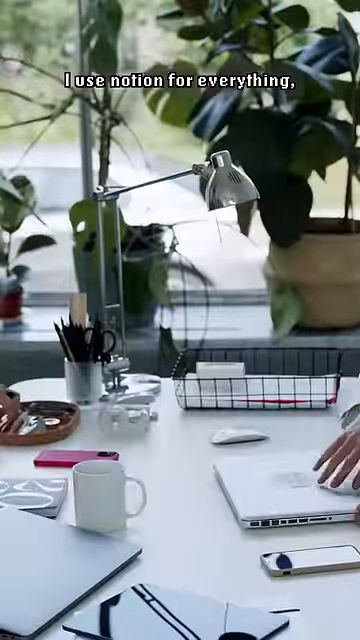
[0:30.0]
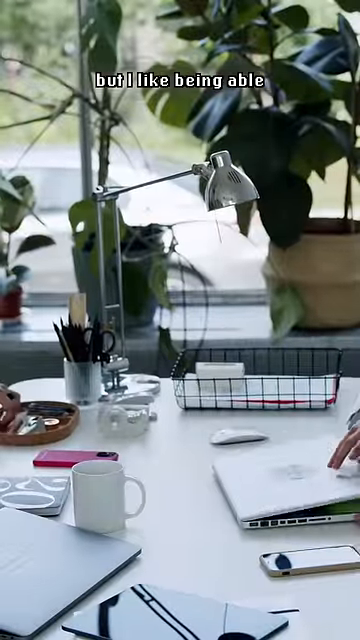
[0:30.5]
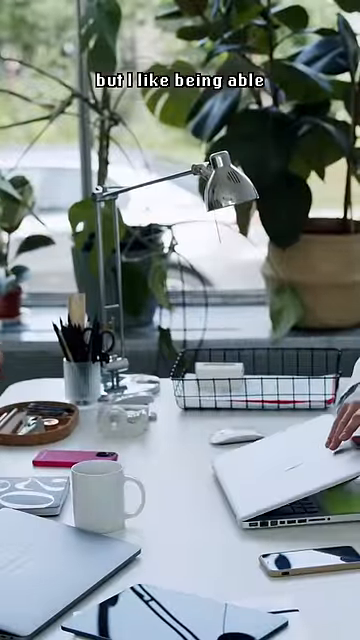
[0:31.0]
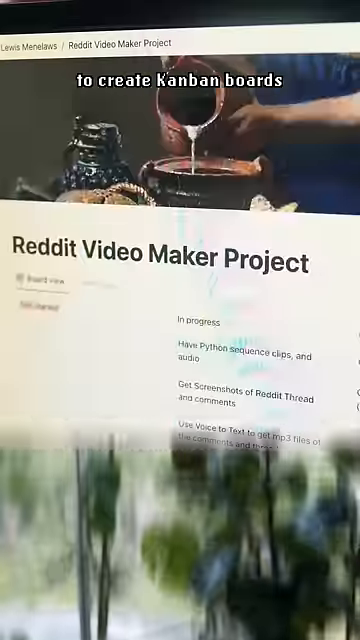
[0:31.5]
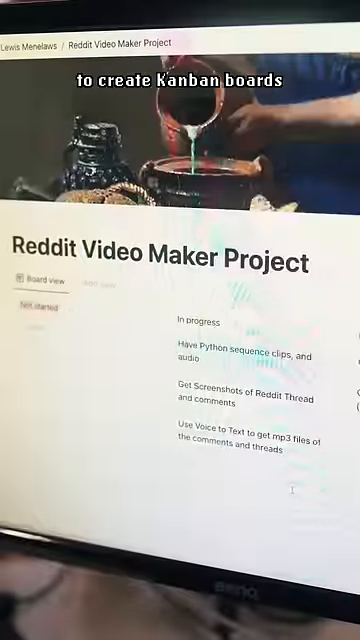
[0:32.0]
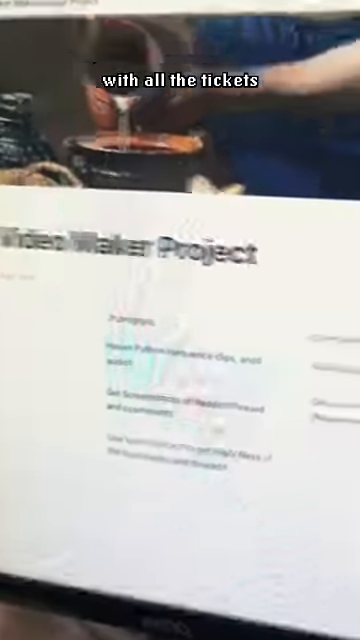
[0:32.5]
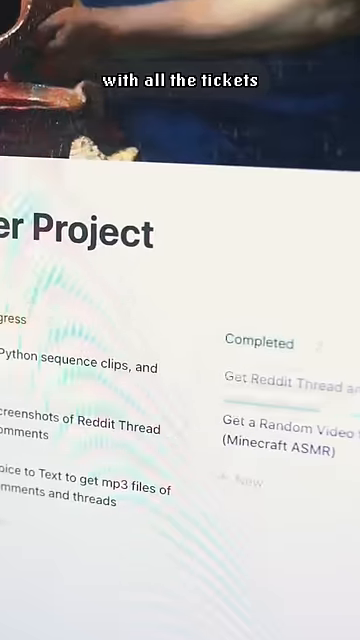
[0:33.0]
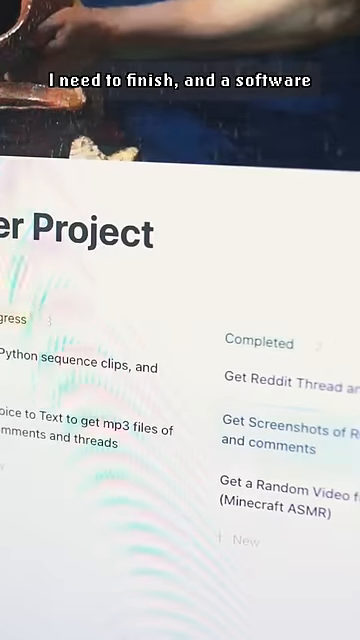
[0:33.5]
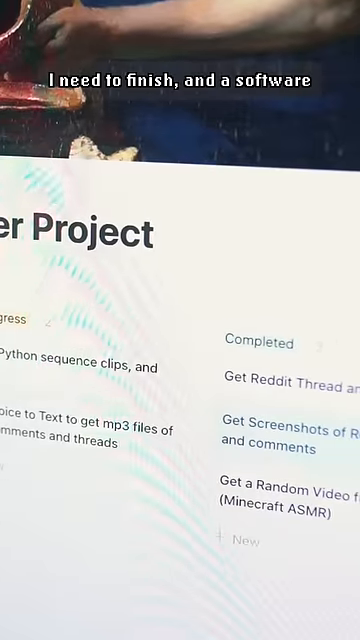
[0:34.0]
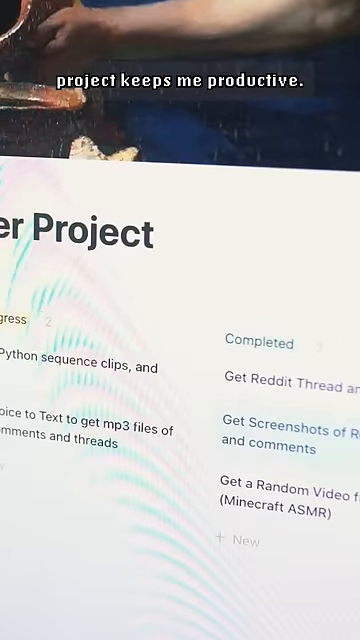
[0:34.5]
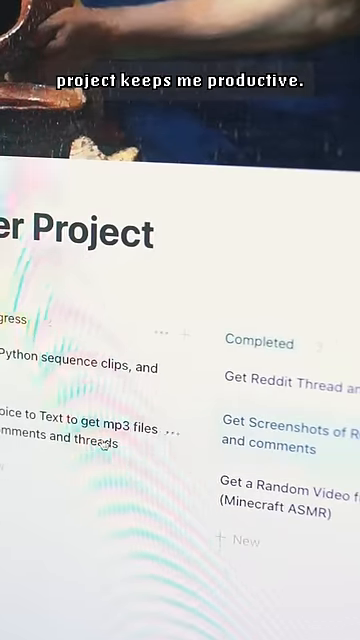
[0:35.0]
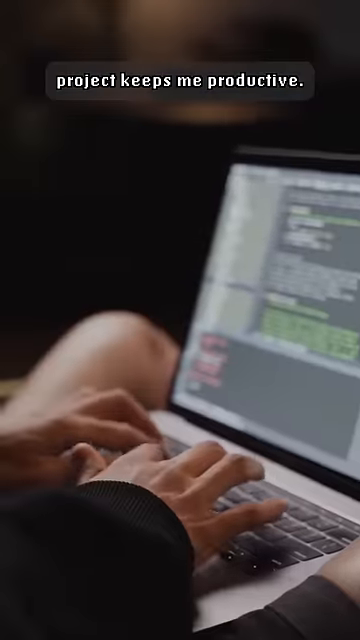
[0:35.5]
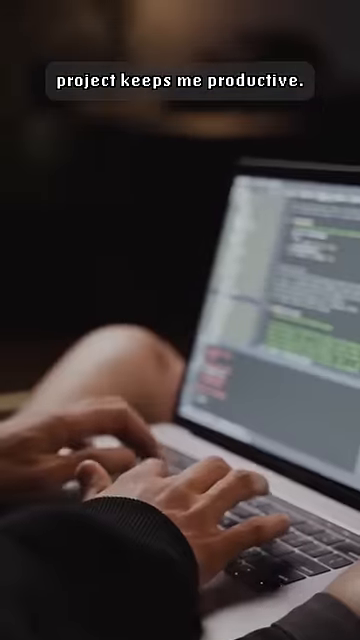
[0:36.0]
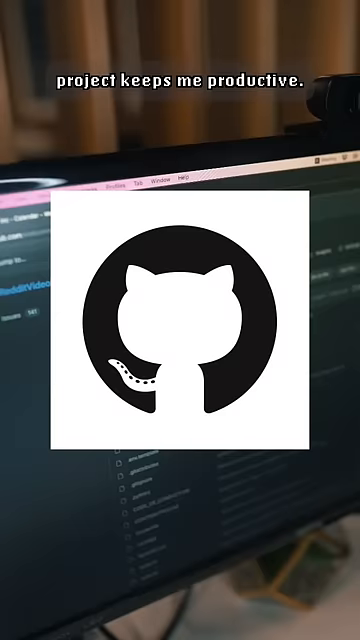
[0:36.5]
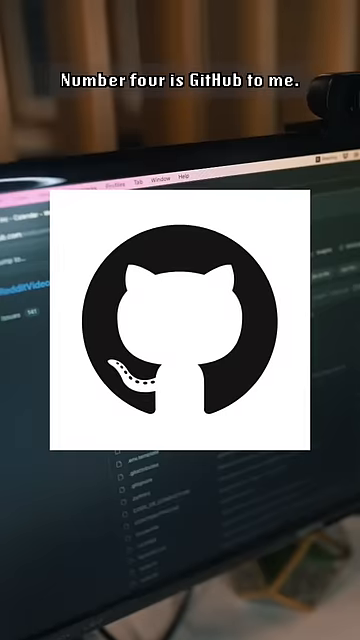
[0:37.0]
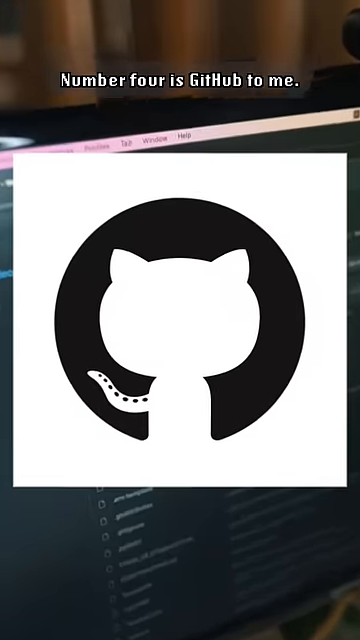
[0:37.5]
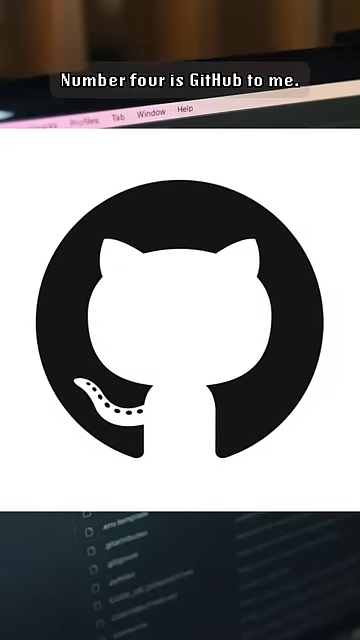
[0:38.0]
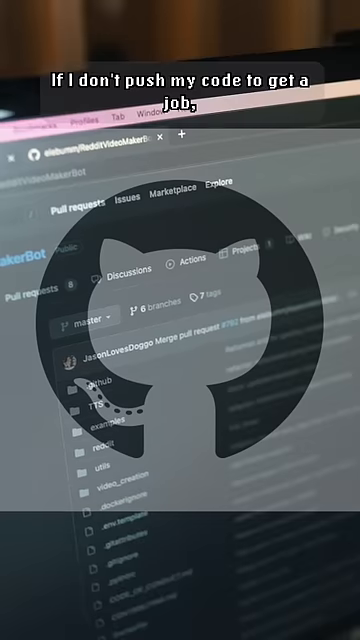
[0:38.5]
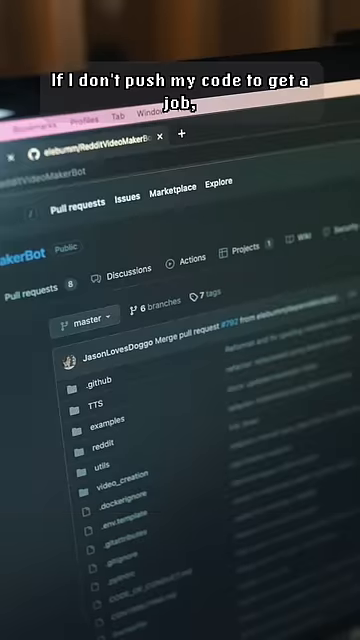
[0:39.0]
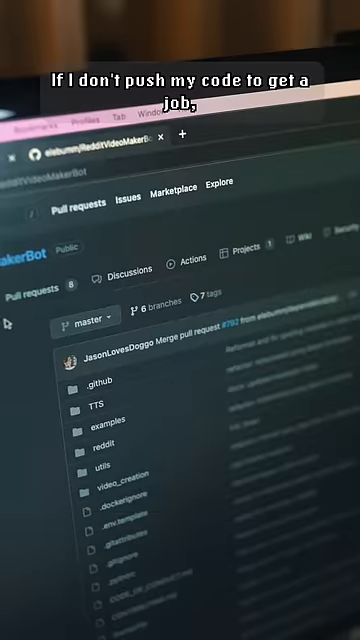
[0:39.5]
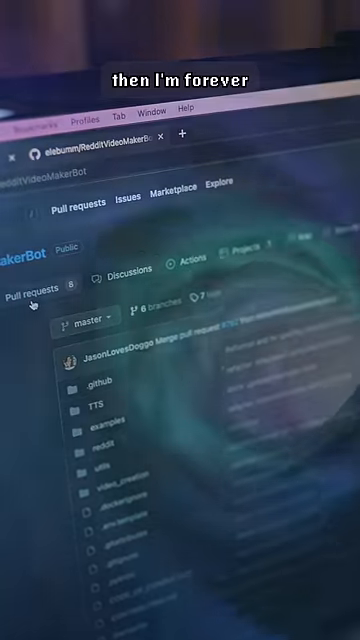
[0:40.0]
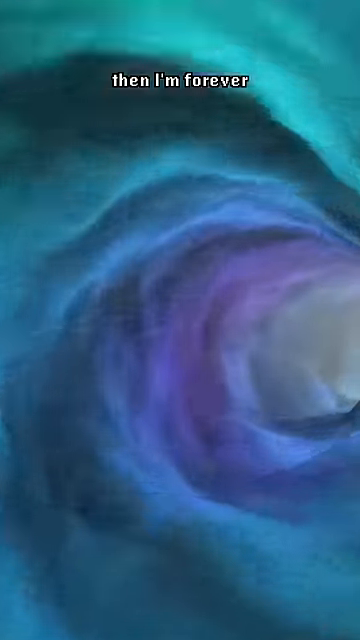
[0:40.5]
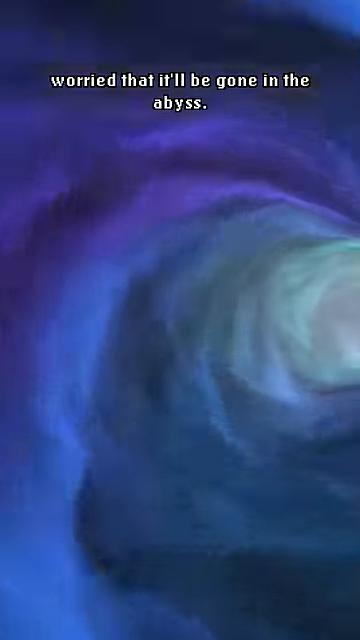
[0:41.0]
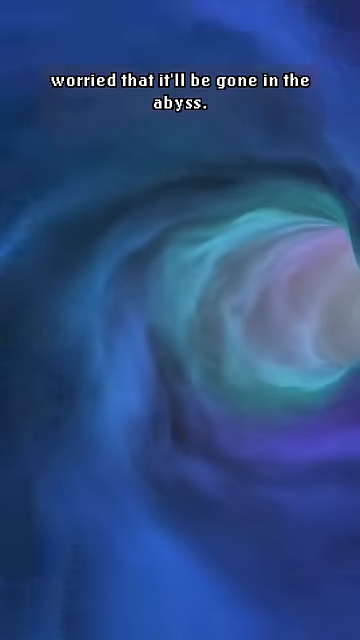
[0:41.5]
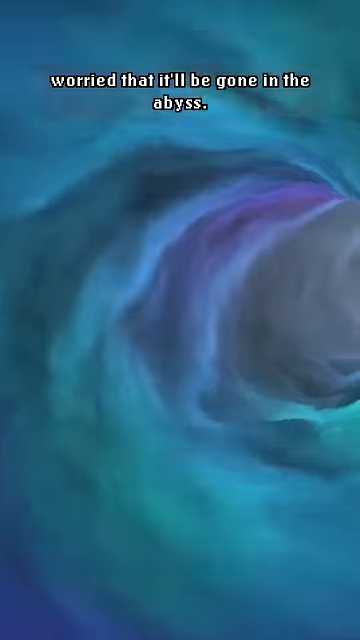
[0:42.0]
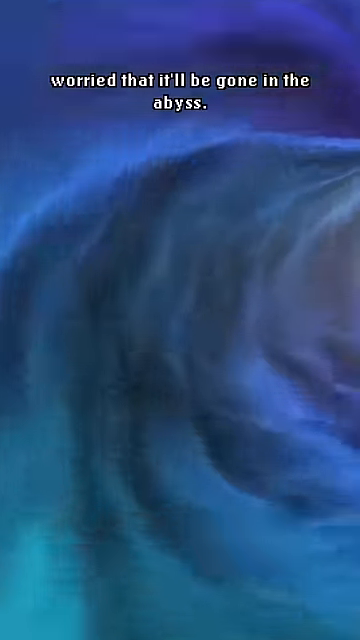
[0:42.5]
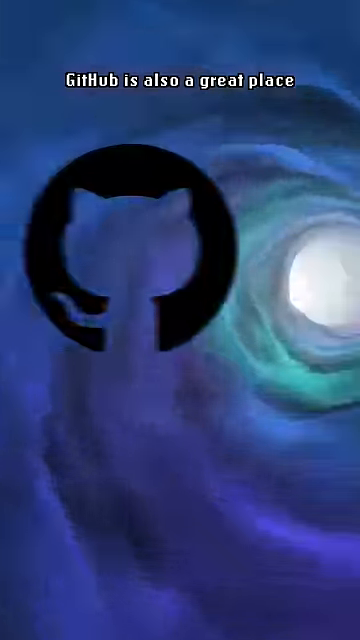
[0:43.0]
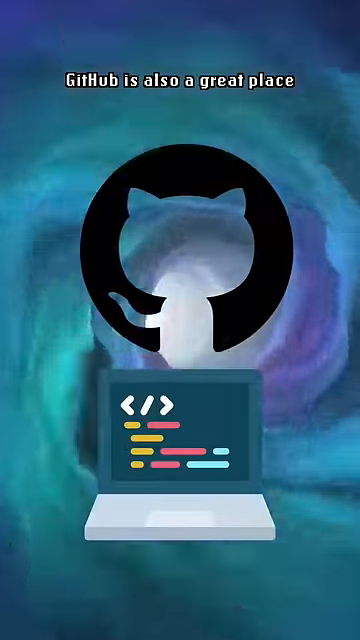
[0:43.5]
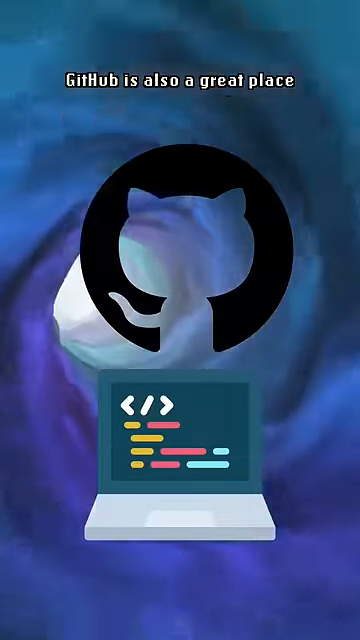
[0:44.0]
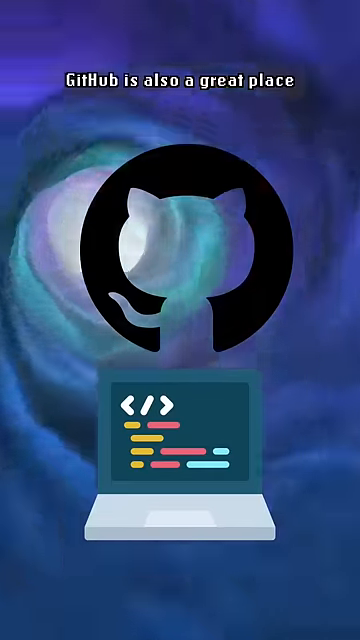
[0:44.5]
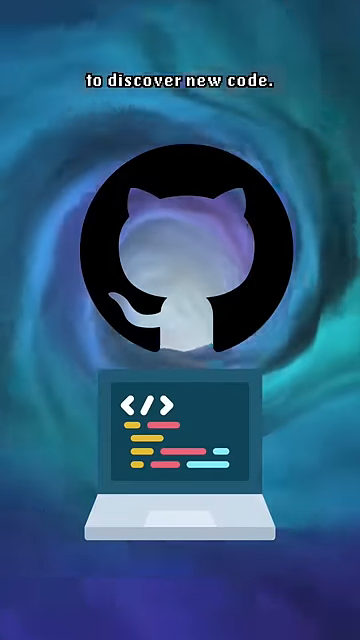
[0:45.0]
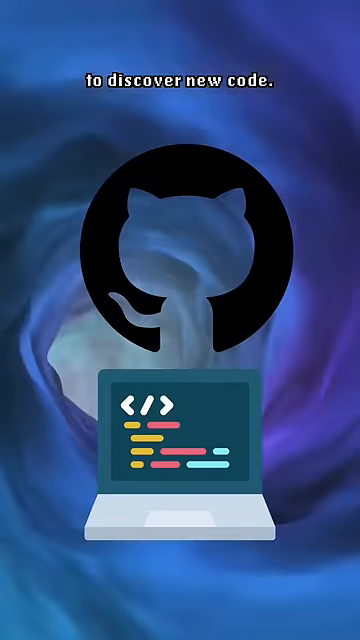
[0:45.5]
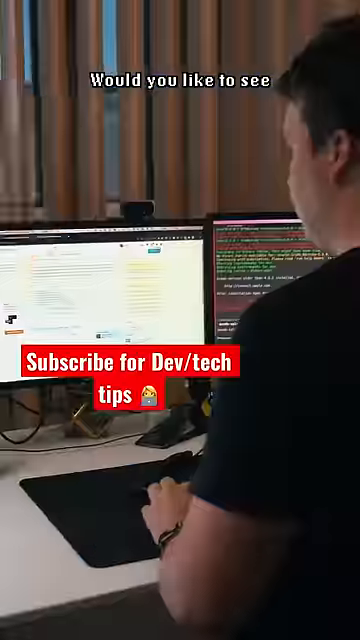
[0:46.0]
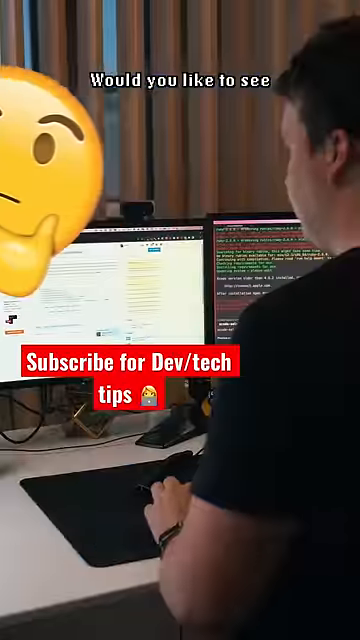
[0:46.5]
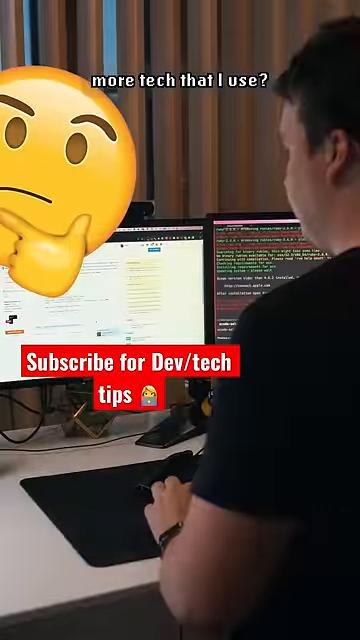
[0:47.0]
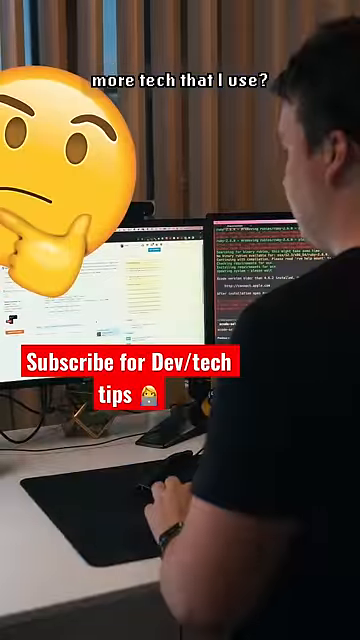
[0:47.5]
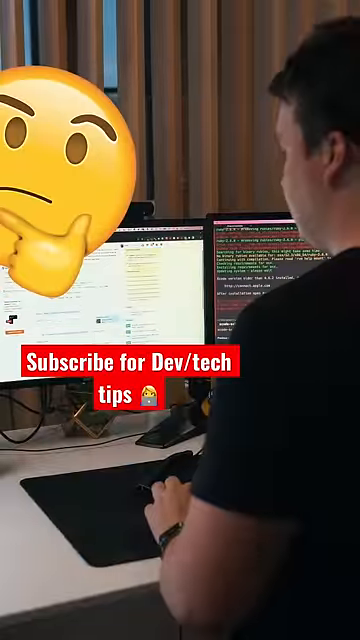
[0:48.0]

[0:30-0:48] A person shows a laptop, his work and his history. He also shows a request to subscribe to his channel or something like that.